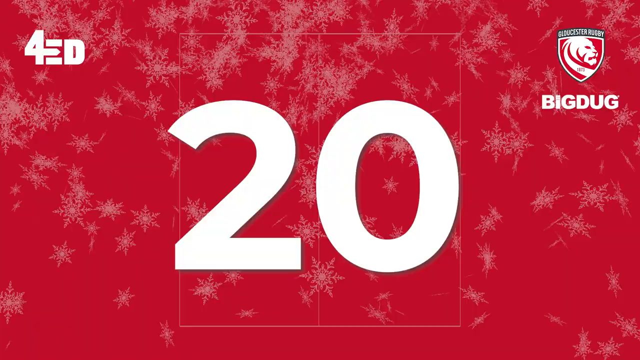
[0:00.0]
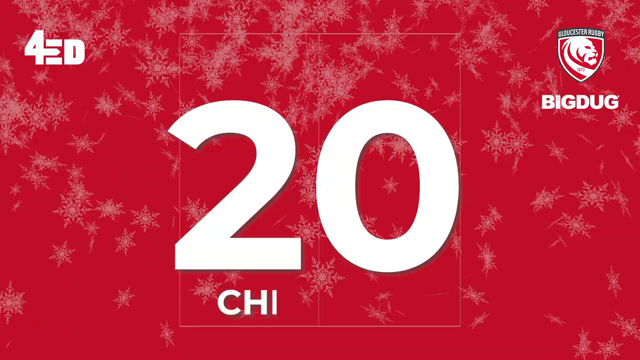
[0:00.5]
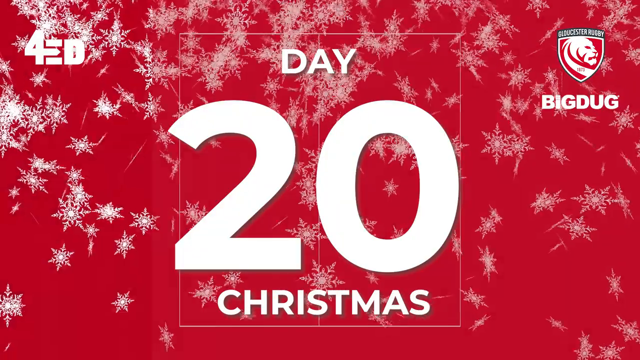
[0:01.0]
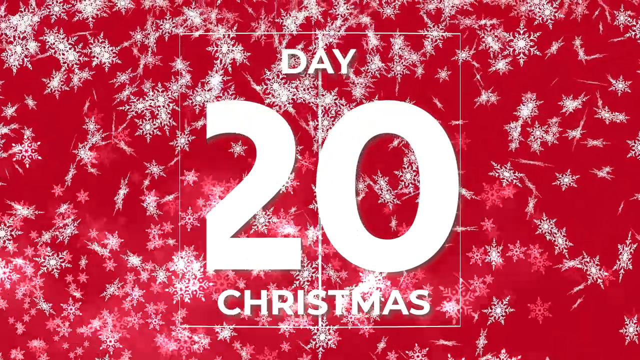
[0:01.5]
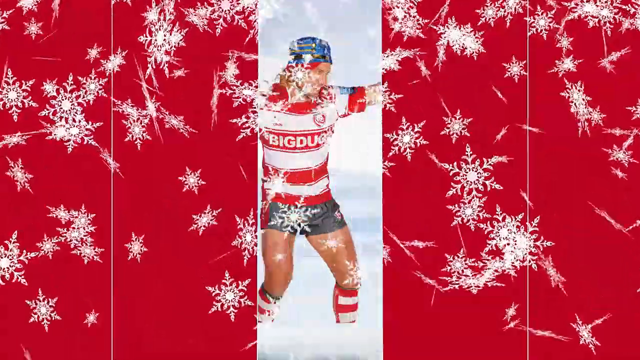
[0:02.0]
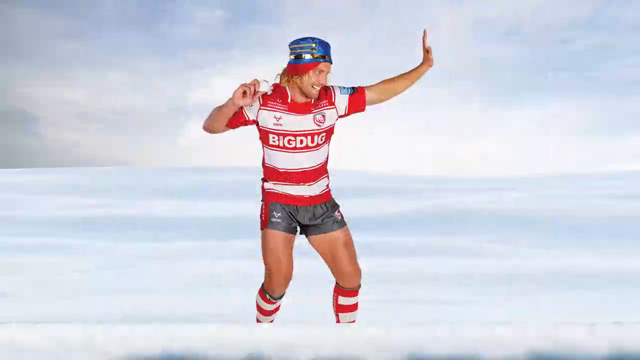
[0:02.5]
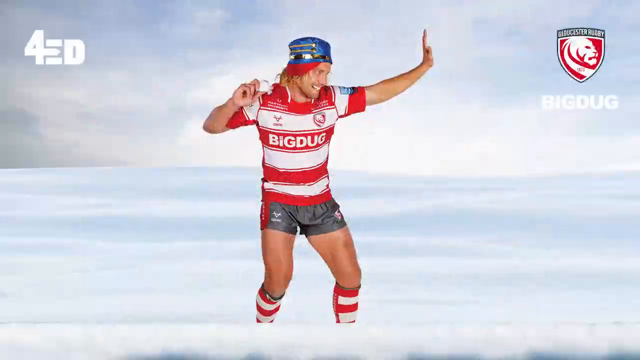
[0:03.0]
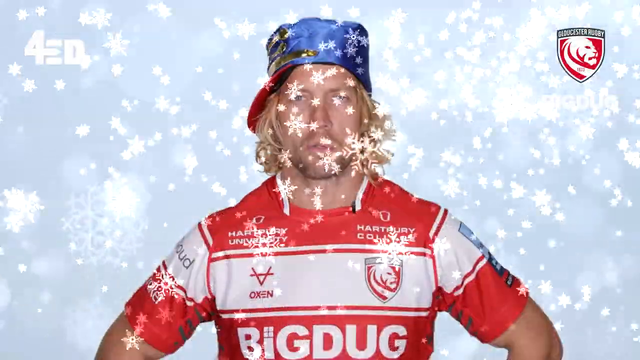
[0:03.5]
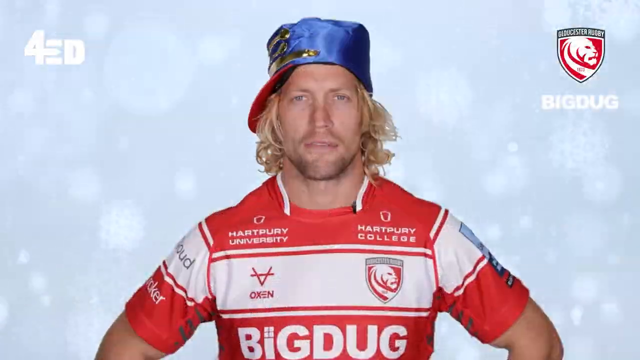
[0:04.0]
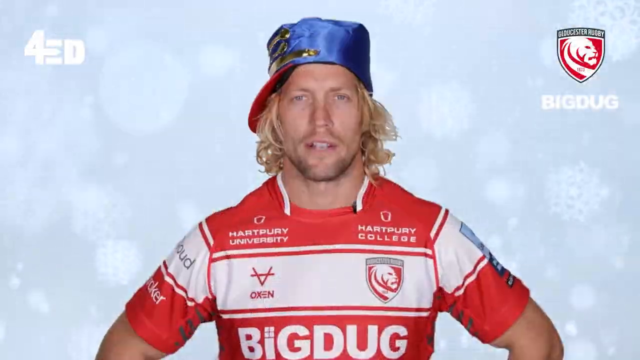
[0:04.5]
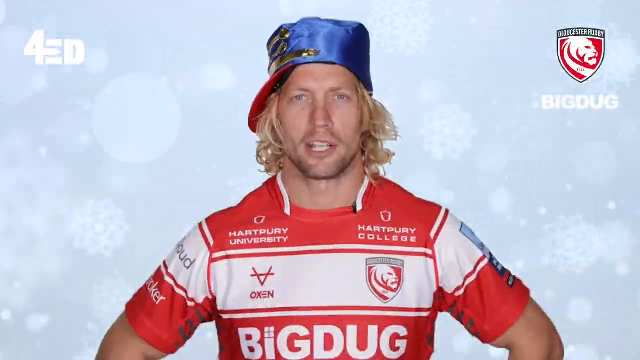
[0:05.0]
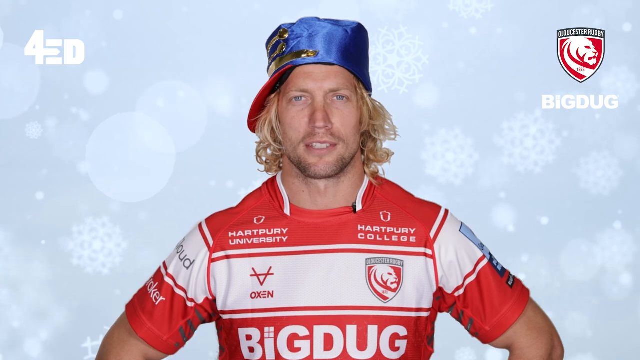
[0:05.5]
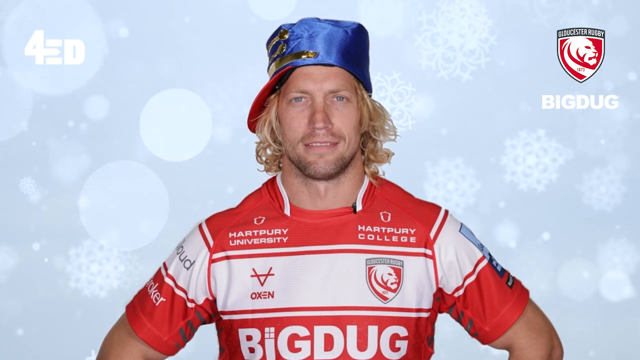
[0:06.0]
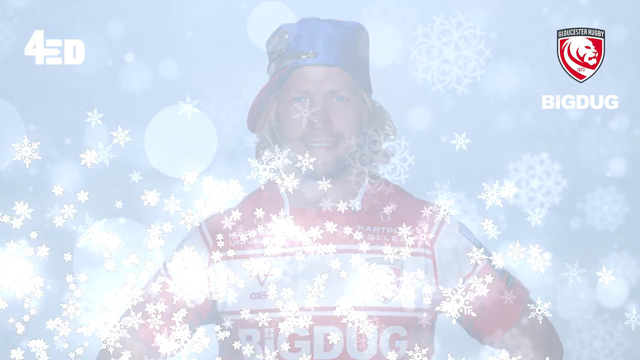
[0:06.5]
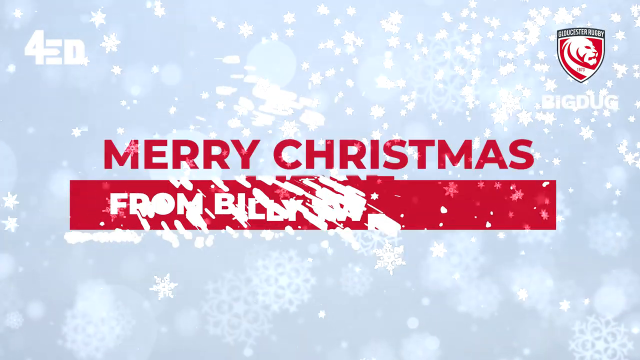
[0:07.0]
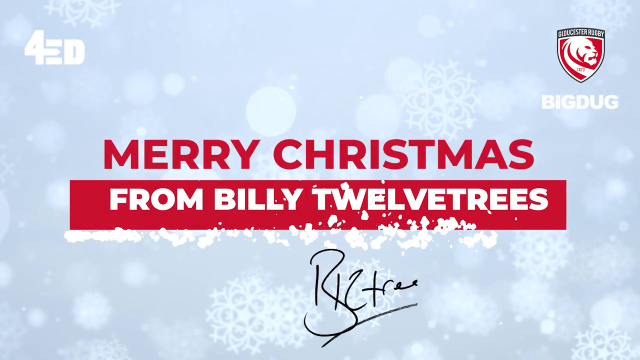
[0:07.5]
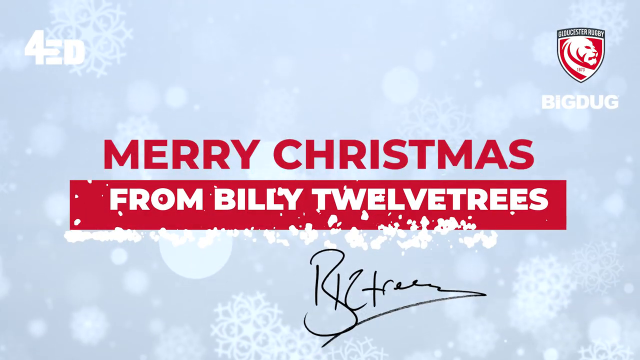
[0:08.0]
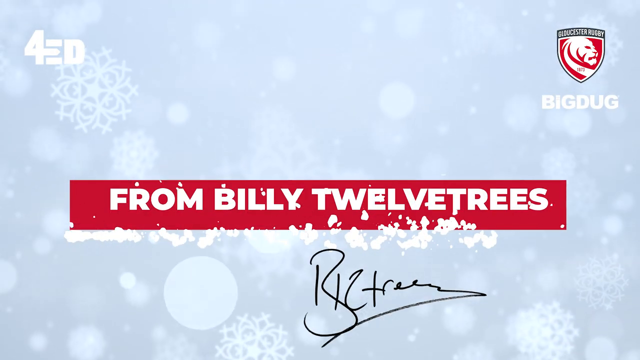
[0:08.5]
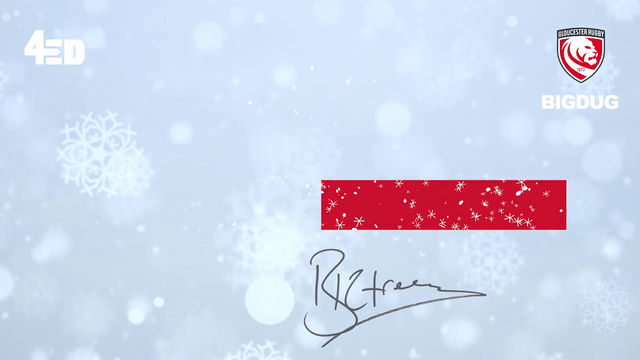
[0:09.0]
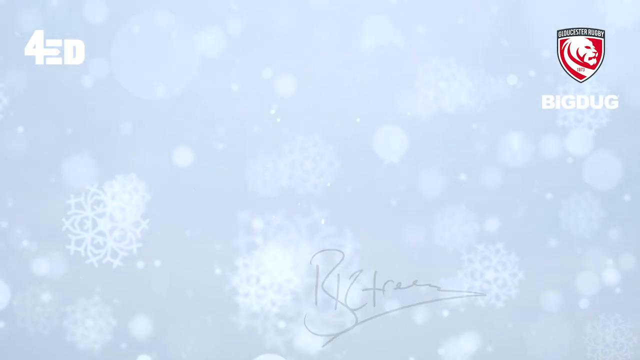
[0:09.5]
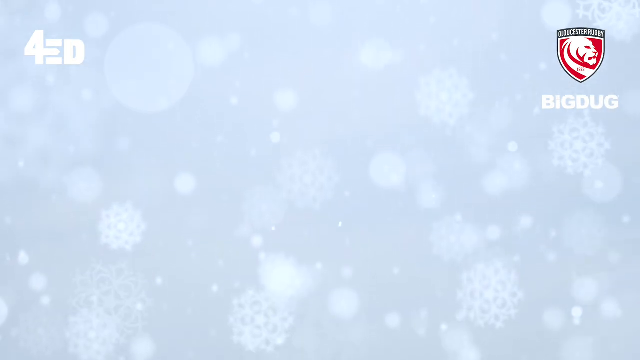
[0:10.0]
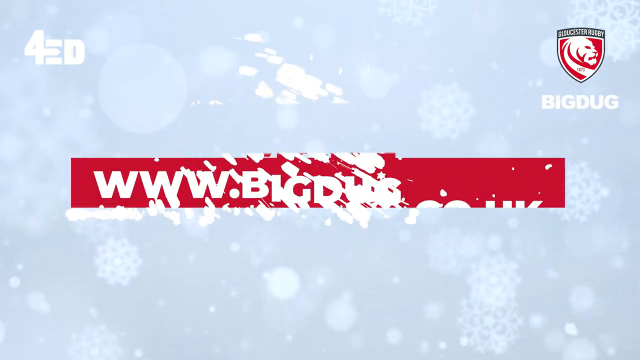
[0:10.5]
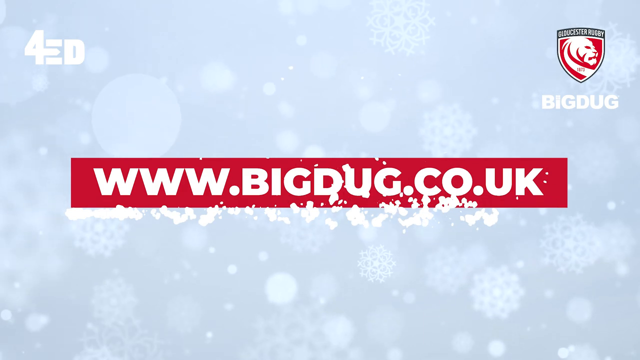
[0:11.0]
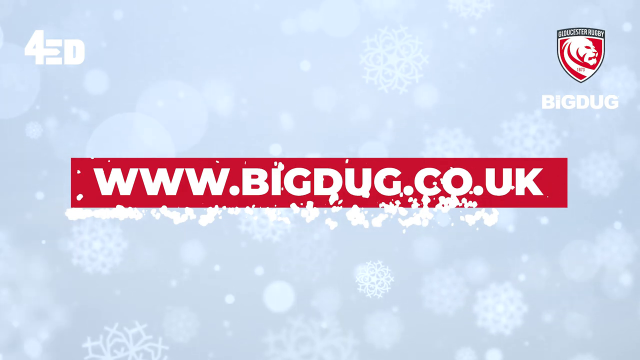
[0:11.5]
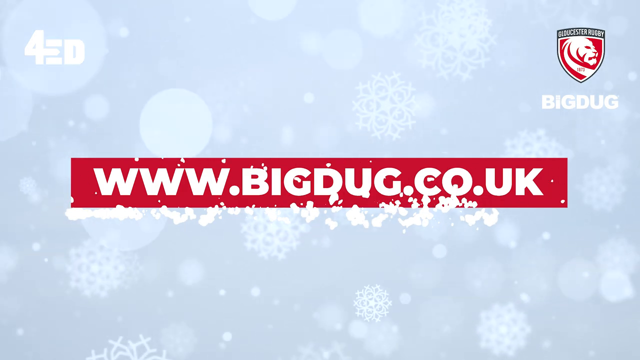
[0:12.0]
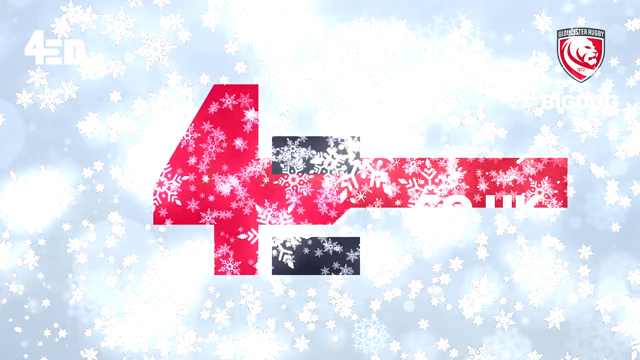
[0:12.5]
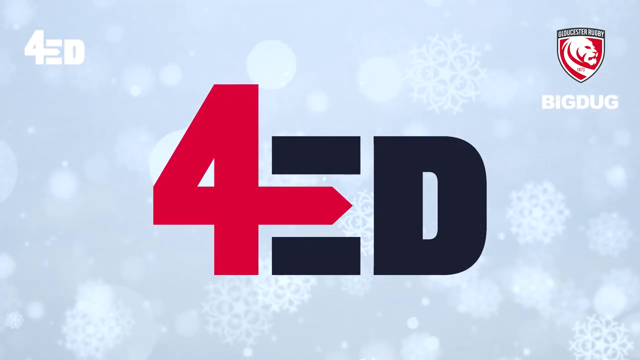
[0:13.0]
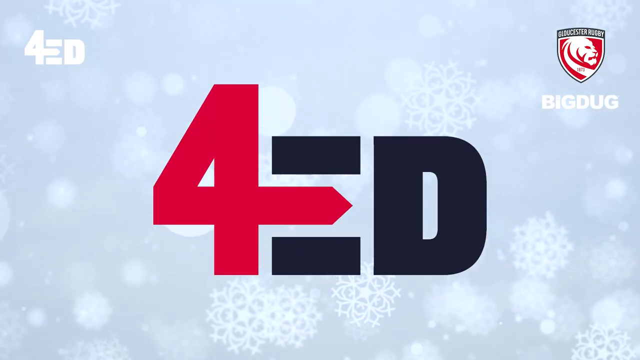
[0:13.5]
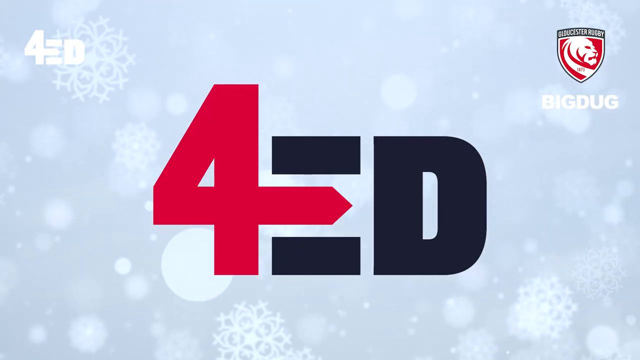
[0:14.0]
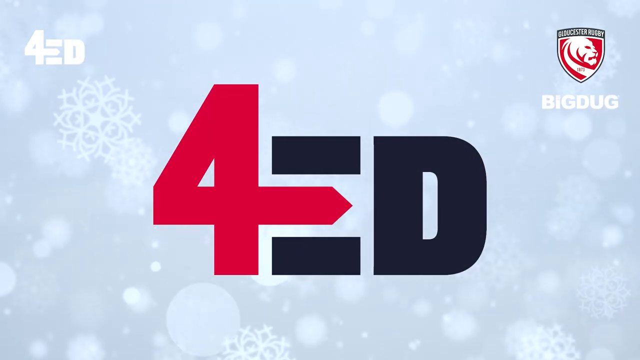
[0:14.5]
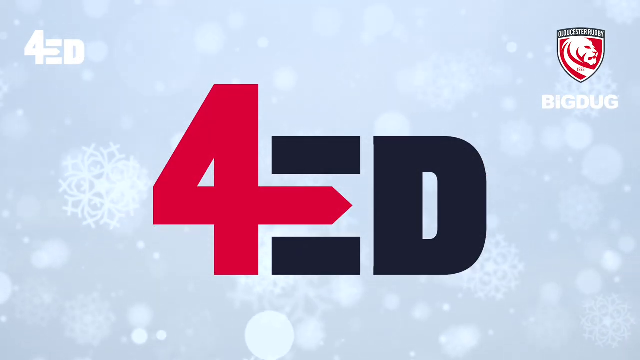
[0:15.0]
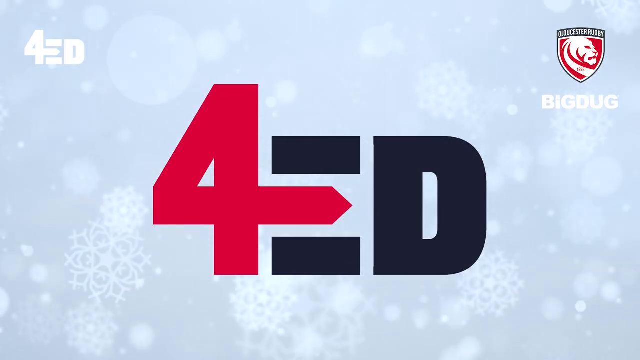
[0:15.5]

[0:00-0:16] The number 20 appears in the middle of the screen, followed by "day 20 Christmas." The background is red, and a whole bunch of white snowflakes come from the top and fly everywhere. The scene then changes to a man who is posing, wearing what looks like a uniform, like a sports uniform. Next he is shown up close, facing the camera. He wears a purple and red hat sideways and has long blonde hair. He looks at the camera while he talks. He is wearing a red and white rugby shirt, and a rugby logo is in the top right corner. The man then disappears and the scene changes to the text "Merry Christmas from Billy 12 Trees," with a signature from the man in black ink at the bottom. A big caption shows a website: "www.bigdoug.co.uk," followed by a symbol that says "4 for red."